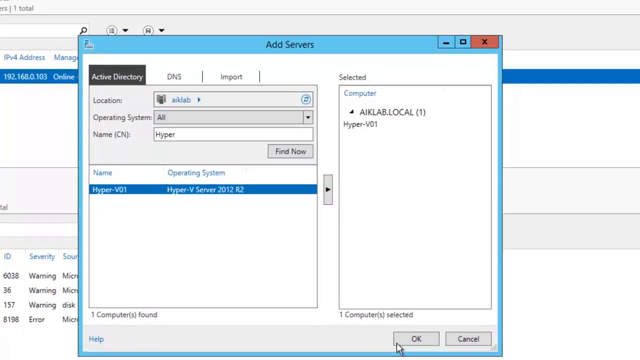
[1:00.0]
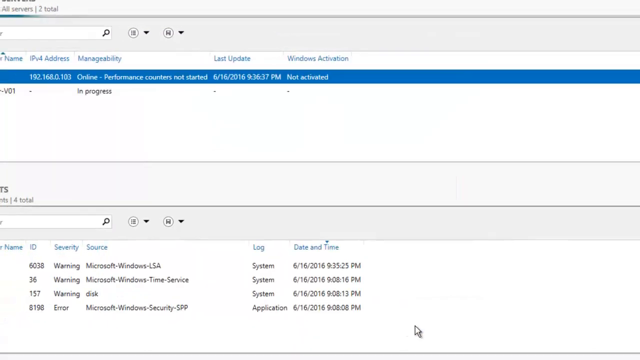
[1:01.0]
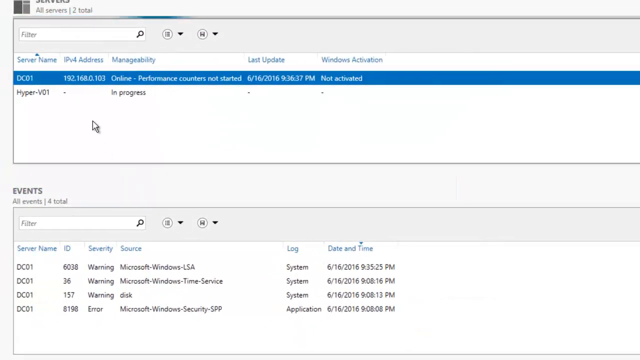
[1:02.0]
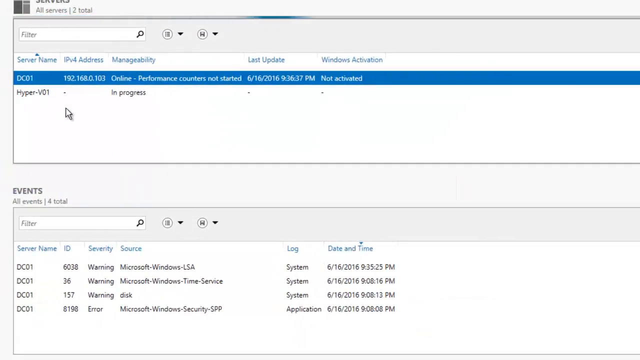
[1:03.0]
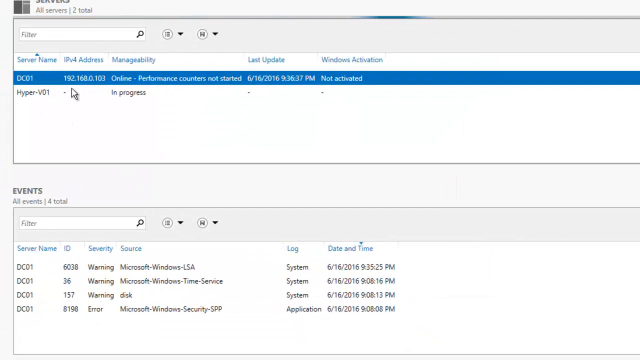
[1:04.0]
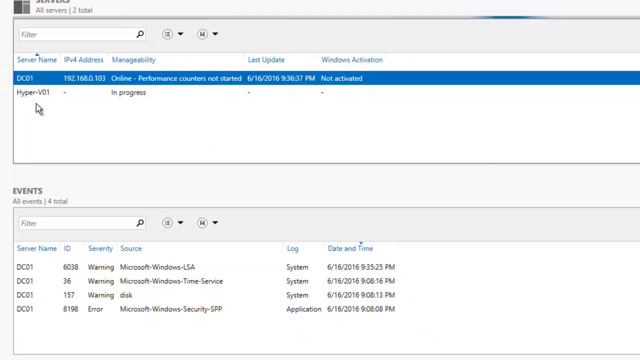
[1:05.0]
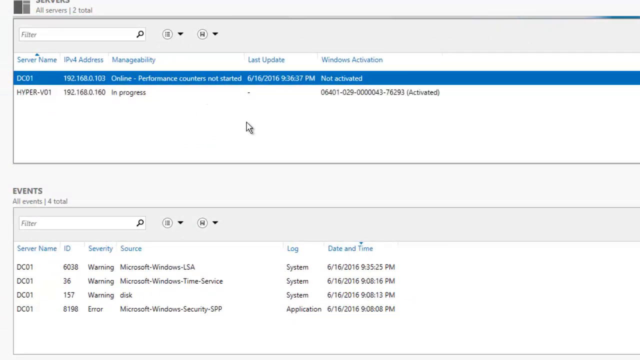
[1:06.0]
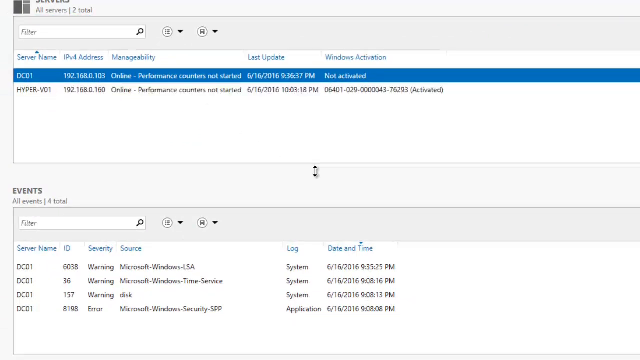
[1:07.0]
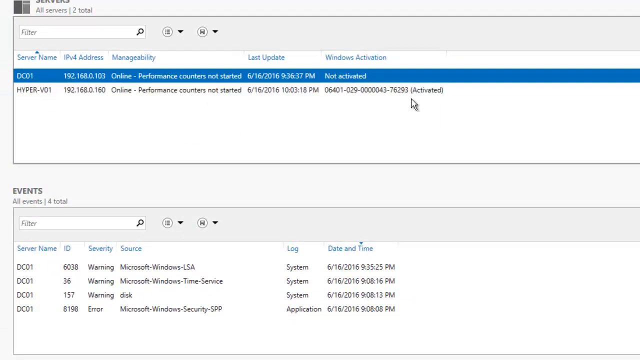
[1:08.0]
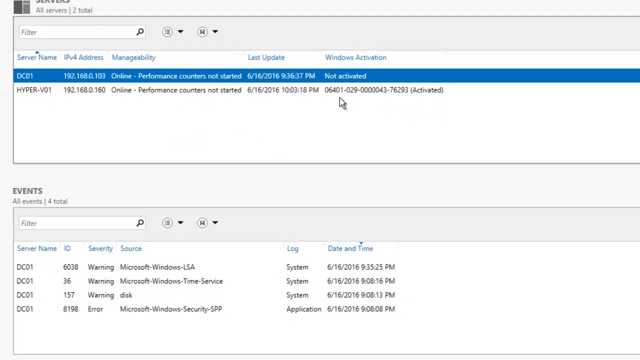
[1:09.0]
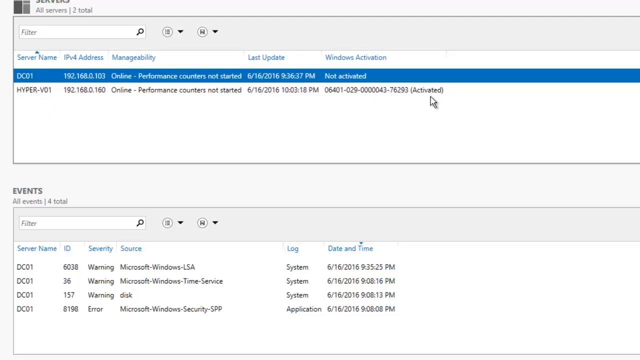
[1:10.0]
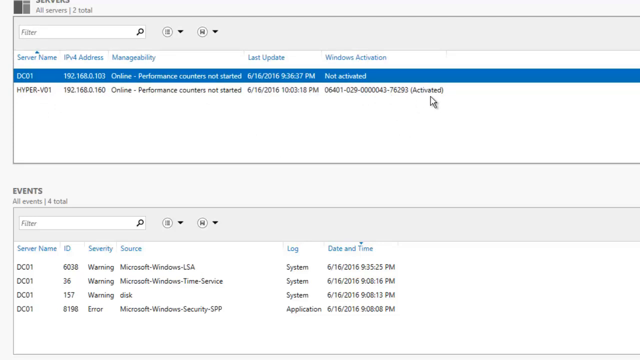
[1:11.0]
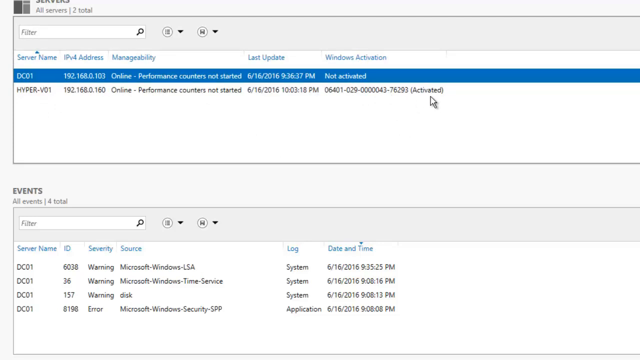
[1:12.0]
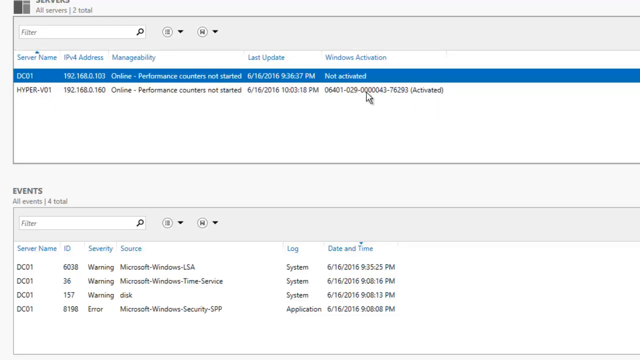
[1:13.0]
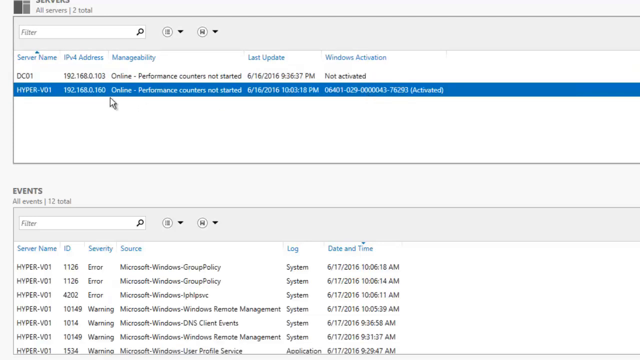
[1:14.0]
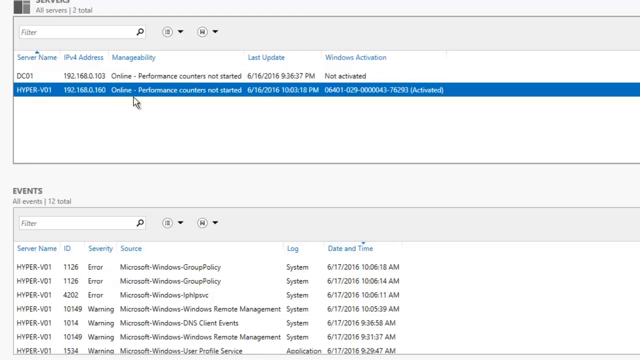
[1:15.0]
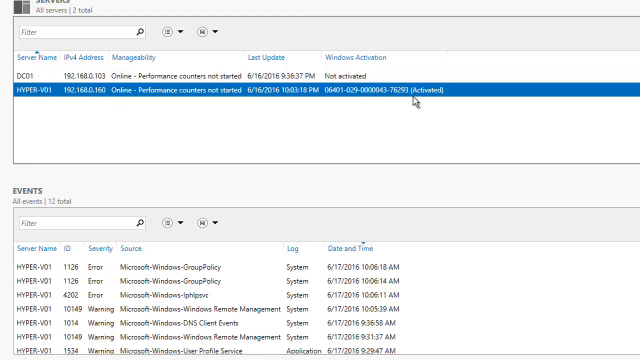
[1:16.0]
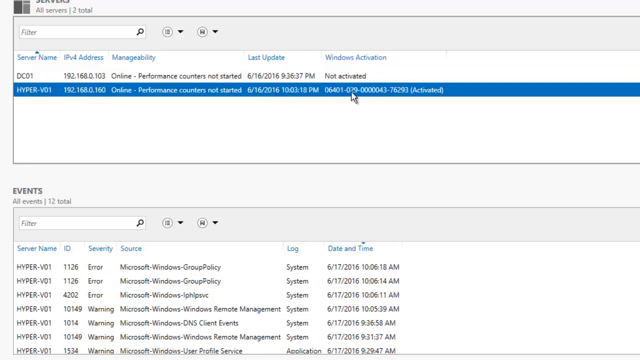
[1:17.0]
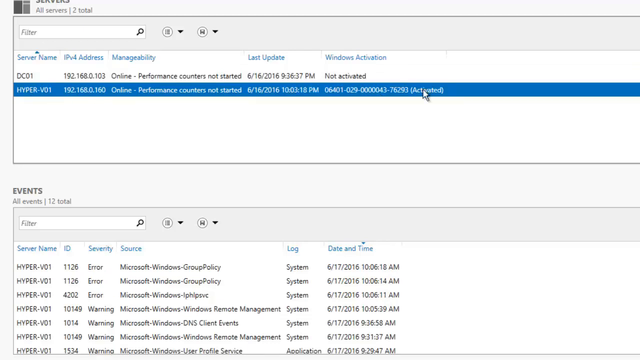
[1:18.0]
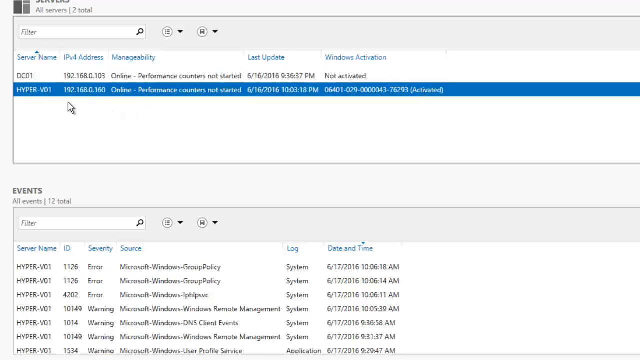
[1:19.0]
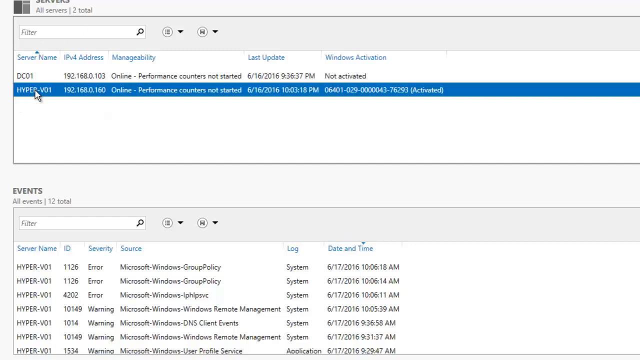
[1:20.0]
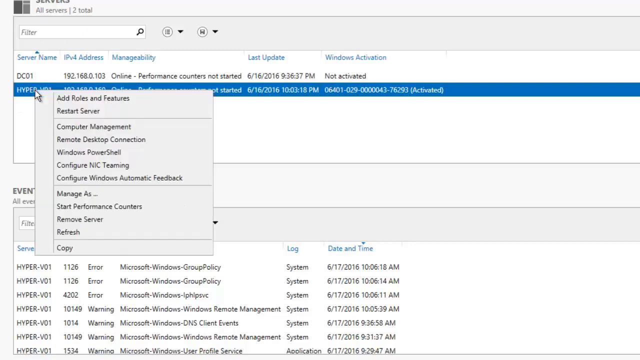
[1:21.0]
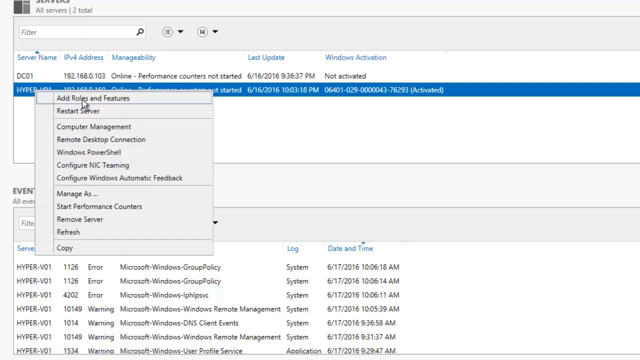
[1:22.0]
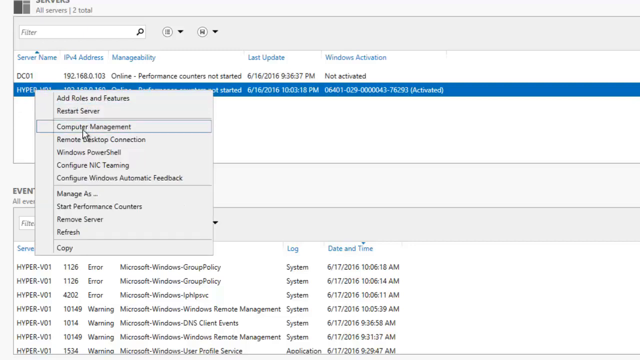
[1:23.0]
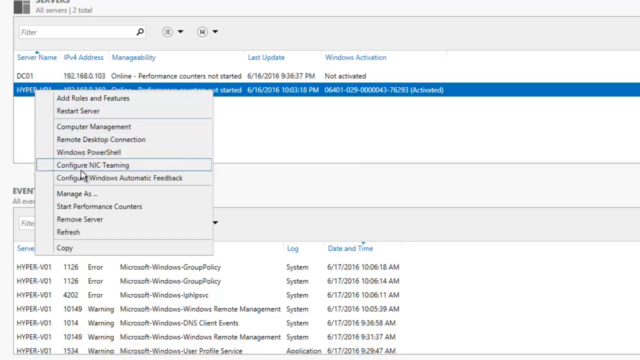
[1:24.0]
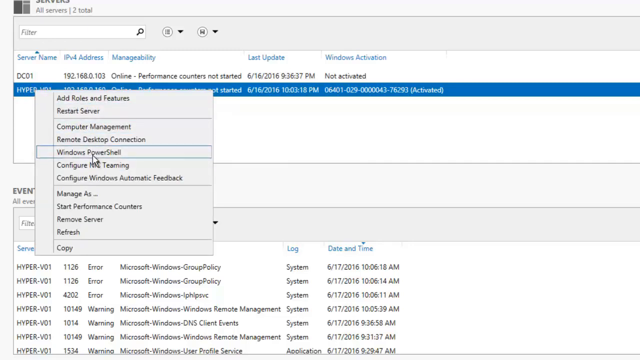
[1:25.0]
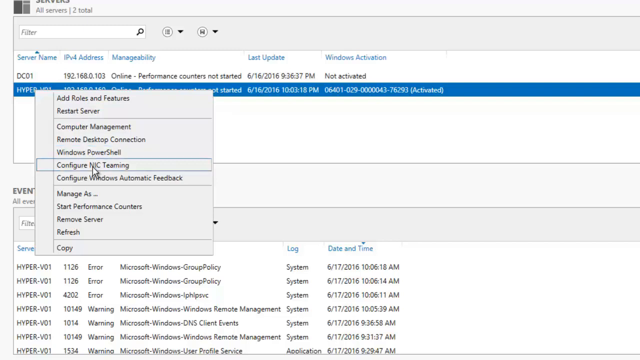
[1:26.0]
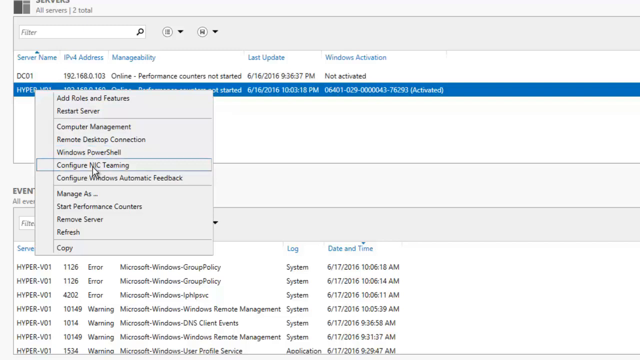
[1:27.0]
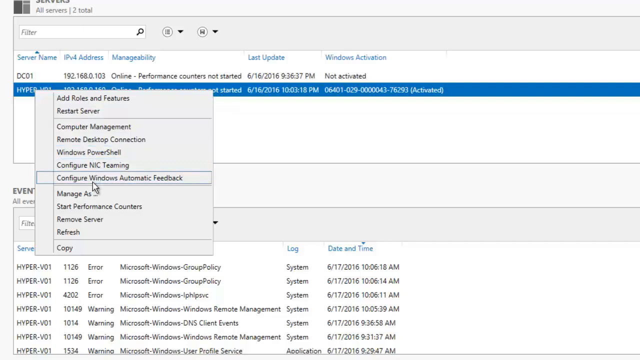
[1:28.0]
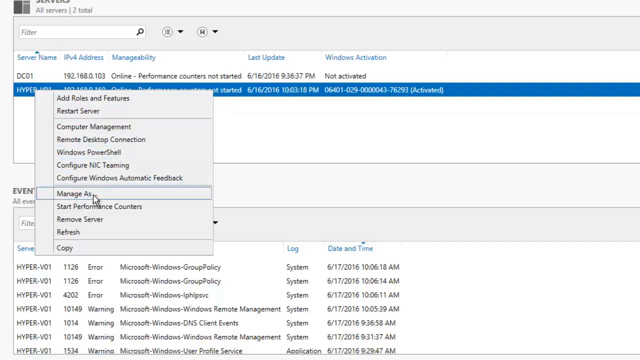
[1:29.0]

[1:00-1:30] A dialog box titled "add servers" is open for adding a server. The Active Directory tab is highlighted and selected; to its right are the DNS and import tabs, which are not selected. In the name (CN) field, Hyper has been entered. Below that, the Hyper V01 server is highlighted under the name, and under the operating system column it says "Hyper V server 2012 R2." The user clicks the OK button in the lower right corner of the dialog box. In the servers section, the new Hyper server appears, and the user clicks on it to highlight it in blue. Under the Windows activation column it shows as activated. The user then opens the right-click menu and appears to be highlighting the different options in it.